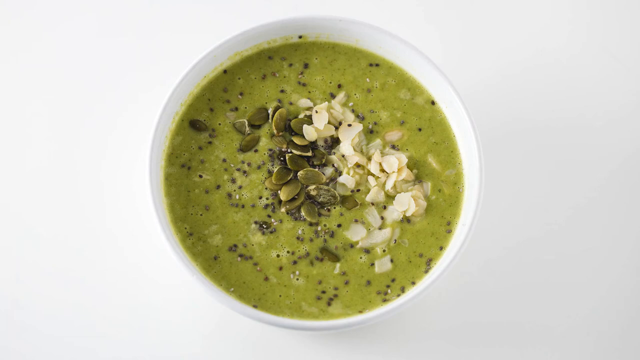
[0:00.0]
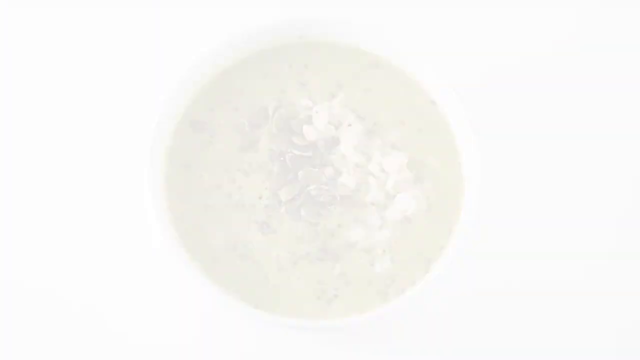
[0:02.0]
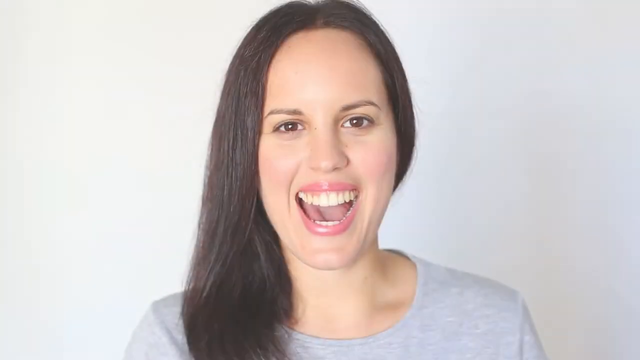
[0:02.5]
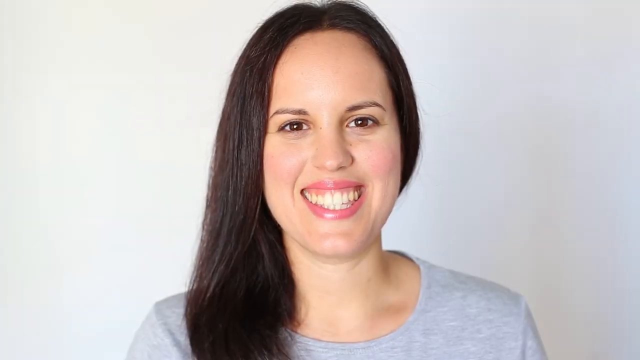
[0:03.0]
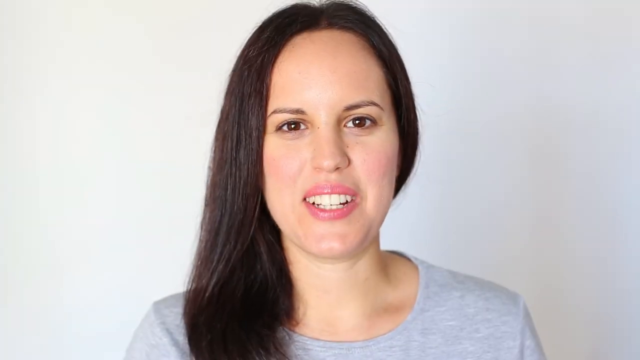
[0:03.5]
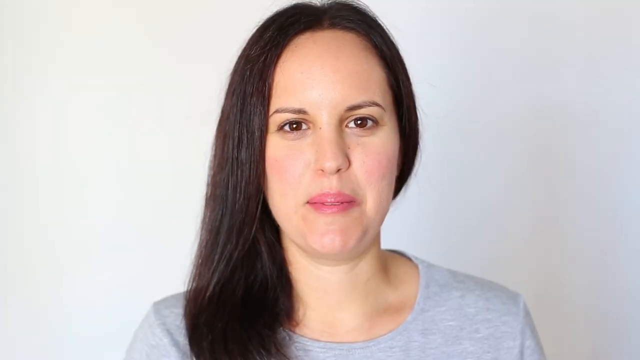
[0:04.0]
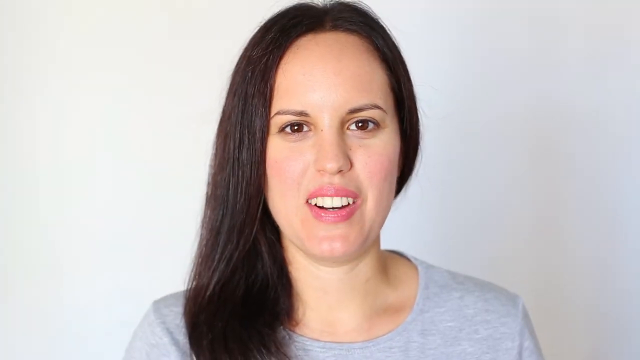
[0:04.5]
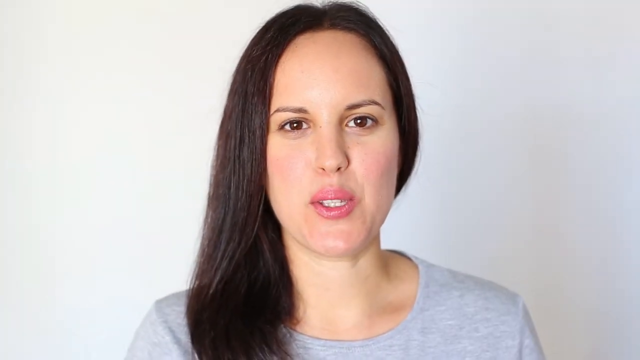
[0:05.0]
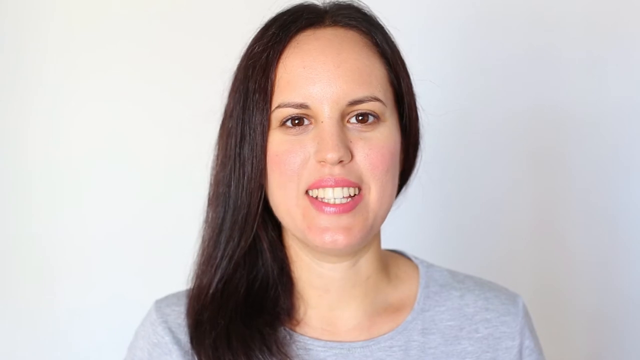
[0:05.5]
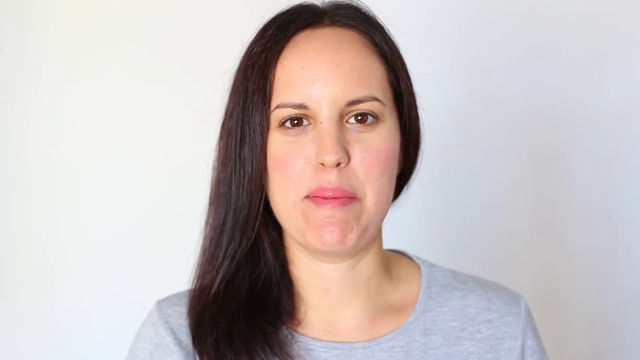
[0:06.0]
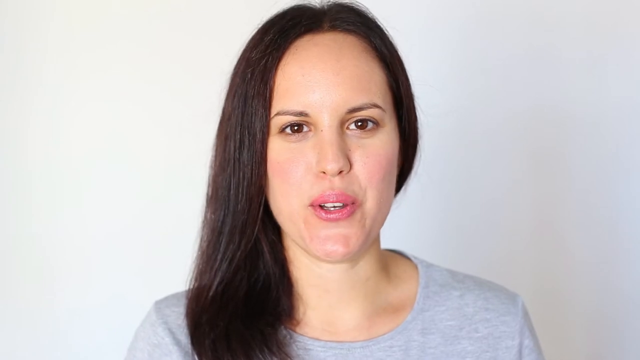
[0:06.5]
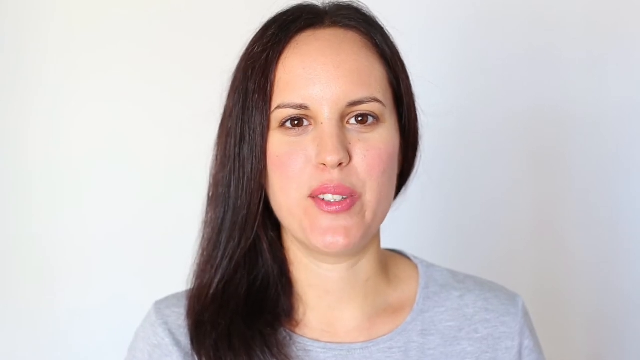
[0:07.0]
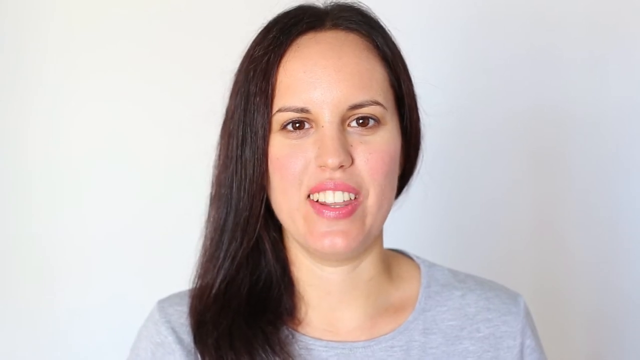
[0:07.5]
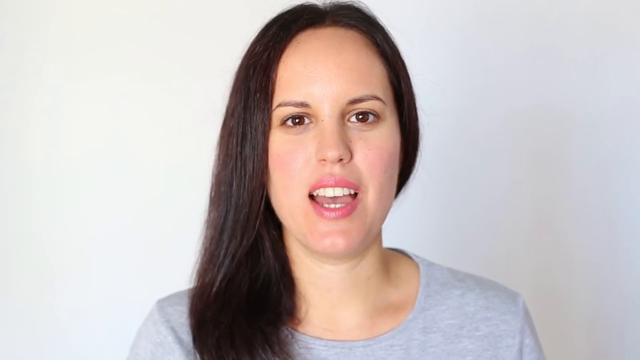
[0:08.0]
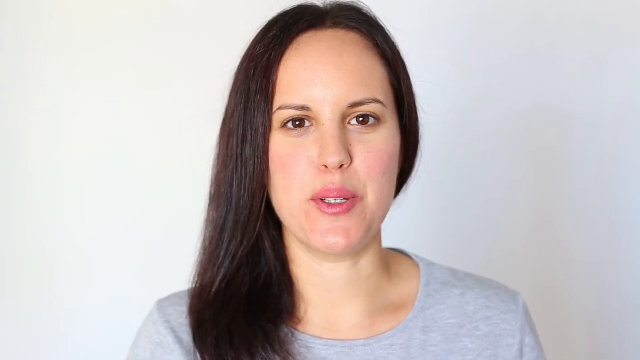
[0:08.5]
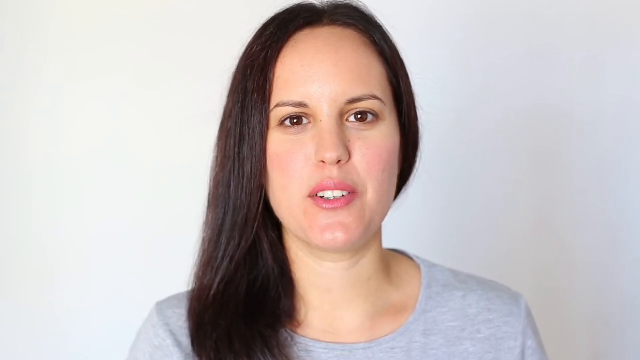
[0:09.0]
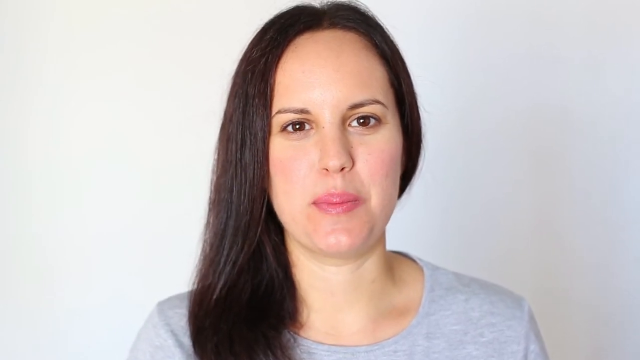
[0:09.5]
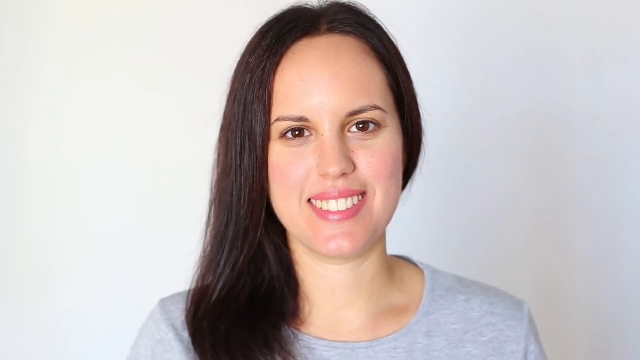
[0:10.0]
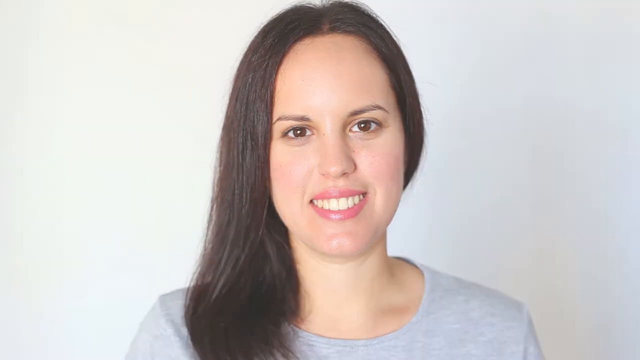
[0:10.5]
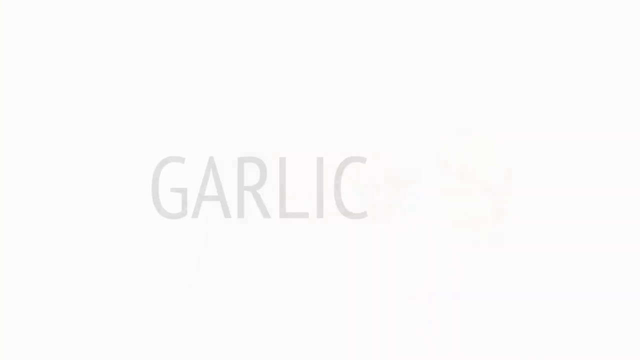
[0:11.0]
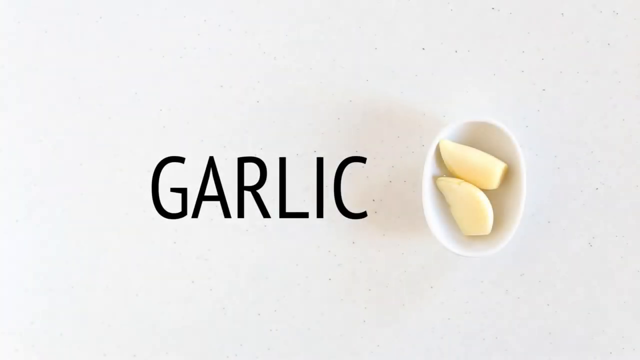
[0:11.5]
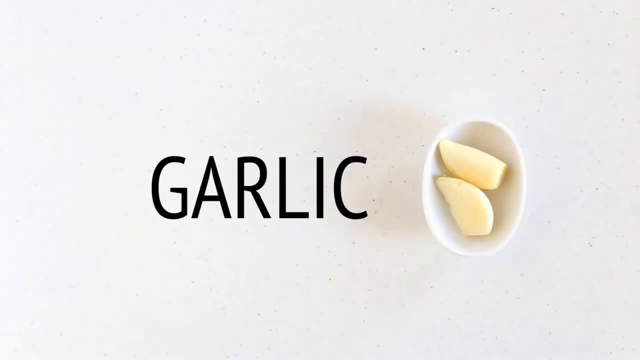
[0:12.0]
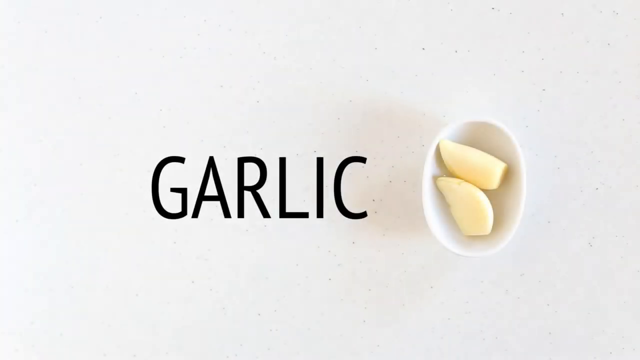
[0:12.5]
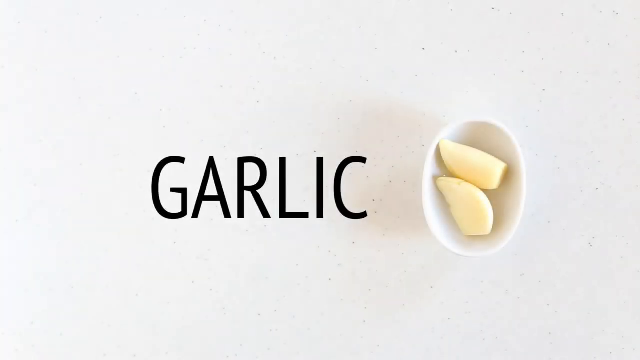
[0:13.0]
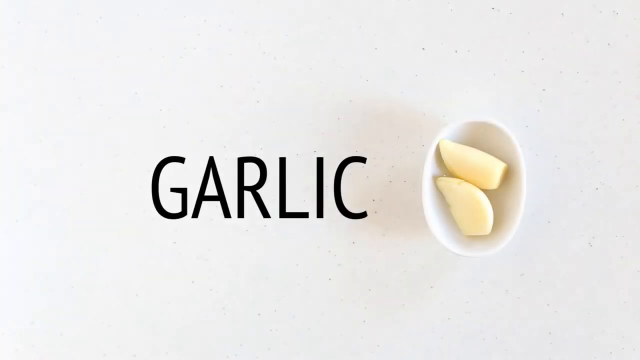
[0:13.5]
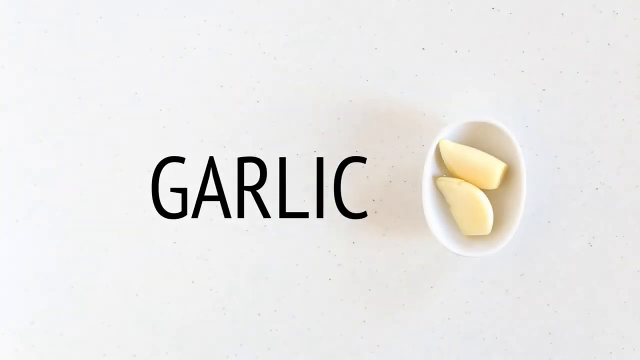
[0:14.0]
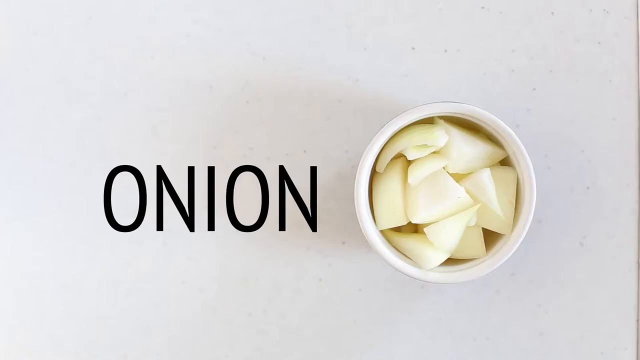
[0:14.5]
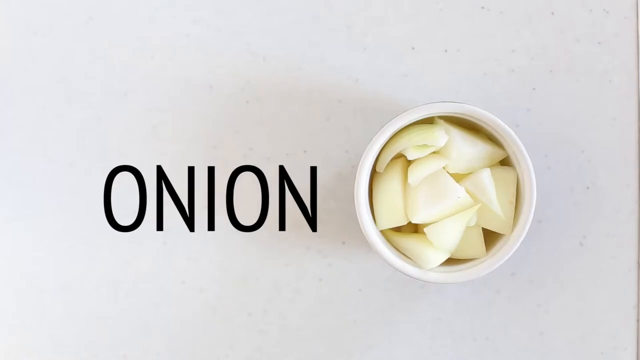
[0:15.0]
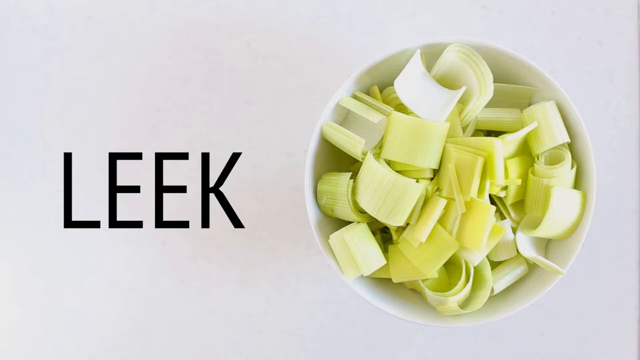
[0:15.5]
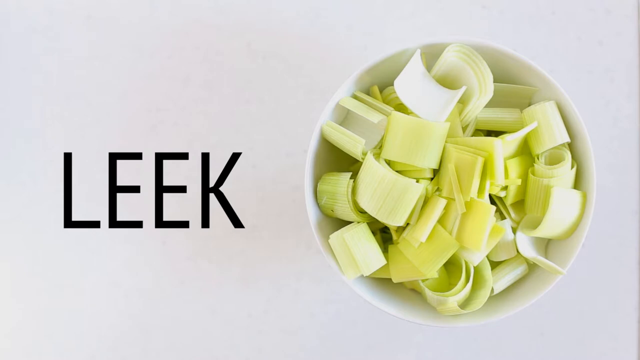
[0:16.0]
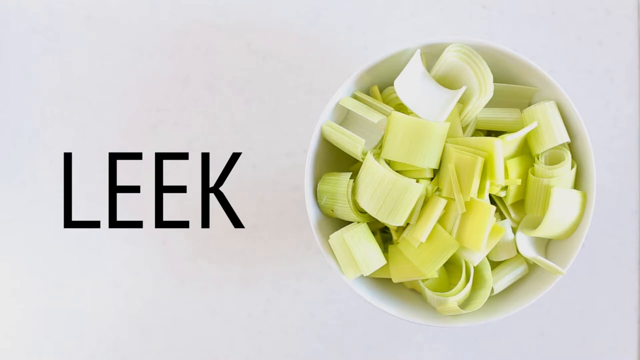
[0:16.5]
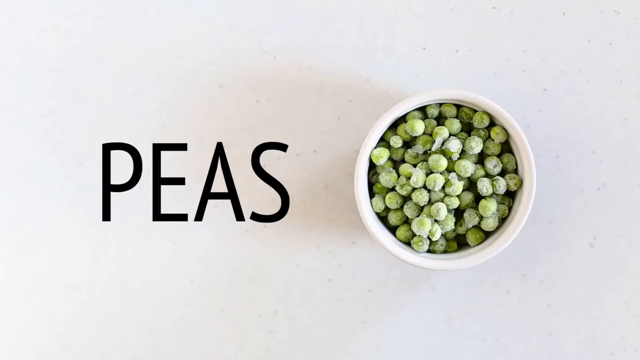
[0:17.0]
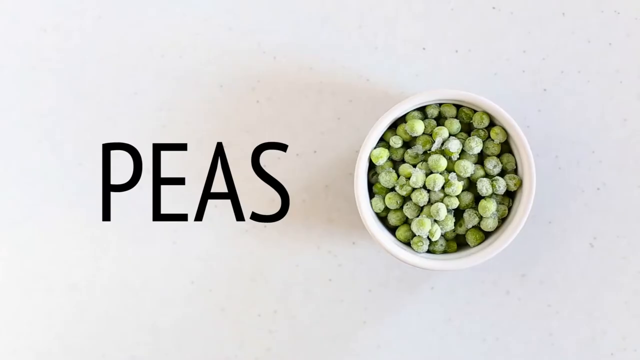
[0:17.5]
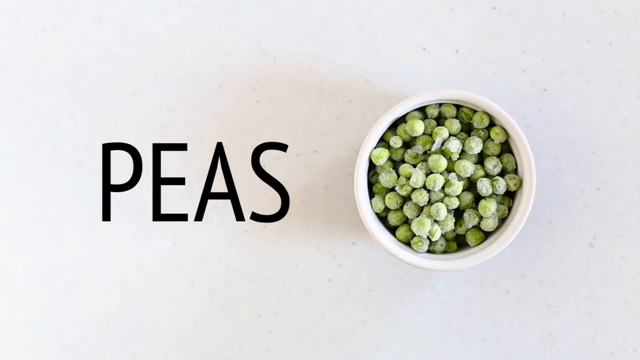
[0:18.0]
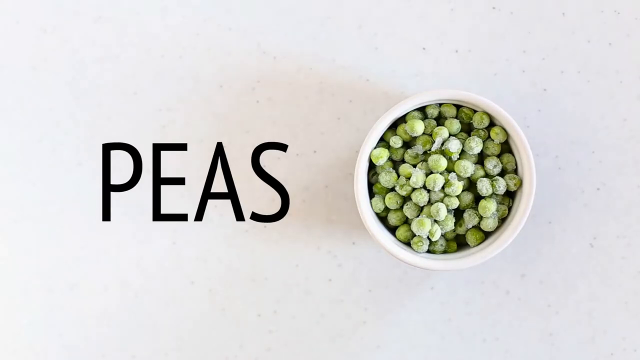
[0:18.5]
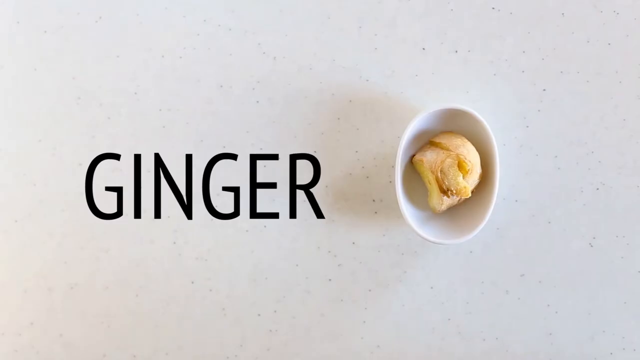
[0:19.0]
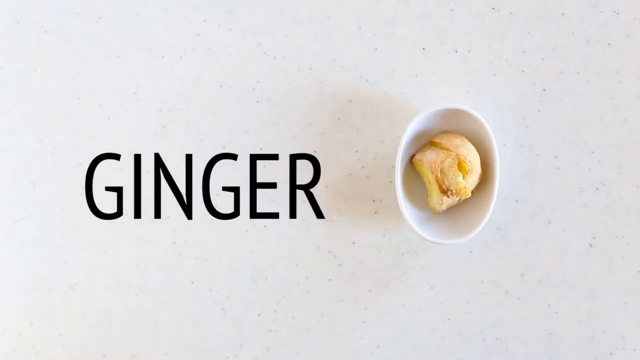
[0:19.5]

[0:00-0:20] The video appears to be from a recipe channel. It opens on a bowl of green soup: a white round bowl seated on a white background, holding green liquid with several other vegetables poured on top. The camera moves to the face of a woman with long black hair and big brown eyes who is smiling. She wears a gray shirt, and only the upper part of her body is visible. She begins to speak to the audience. The video then moves to the ingredients of the soup. The word "garlic" is written in black, with two cloves of garlic next to it. Next, "onion" is written in black beside diced onions in a bowl. Then "leek" appears in black with a bowl of chopped leeks, followed by the word "peas" in black with a bowl of green peas. Finally, "ginger" is written in black next to a little ginger in a bowl.